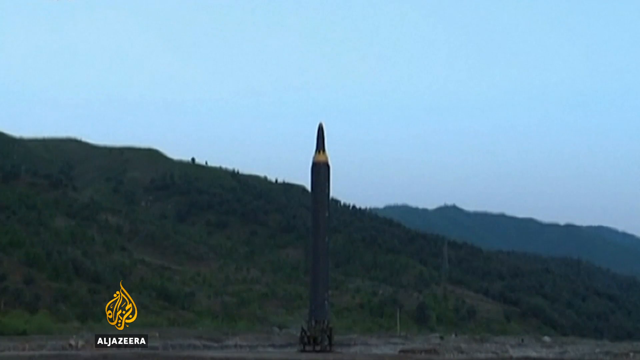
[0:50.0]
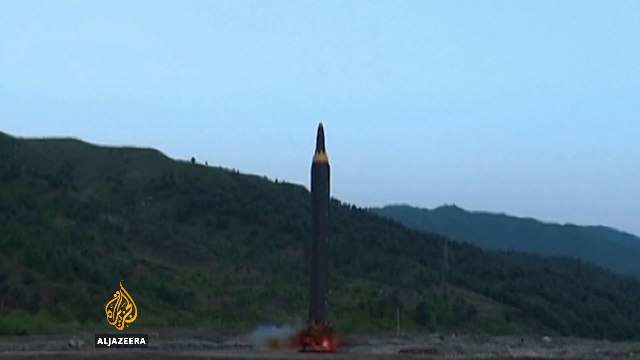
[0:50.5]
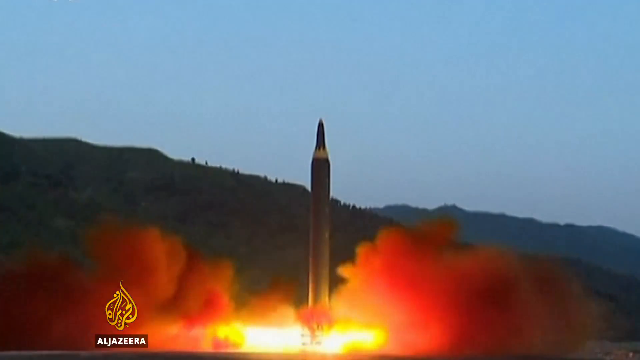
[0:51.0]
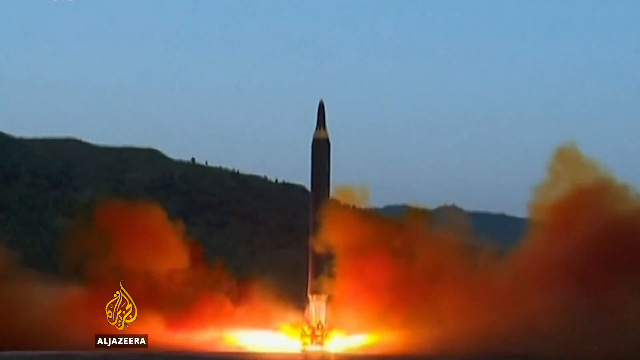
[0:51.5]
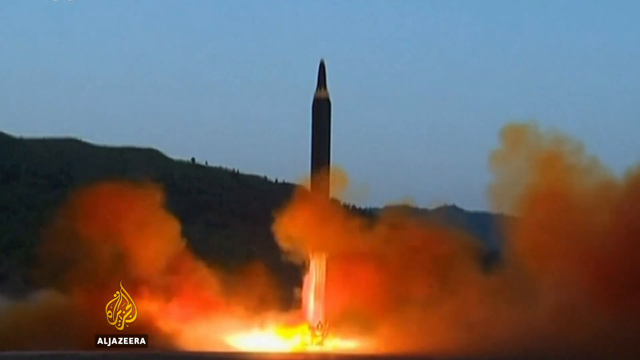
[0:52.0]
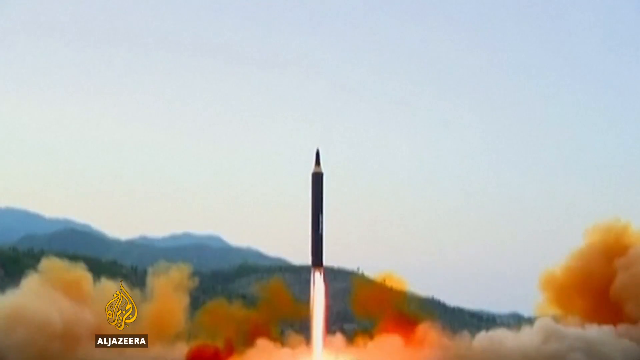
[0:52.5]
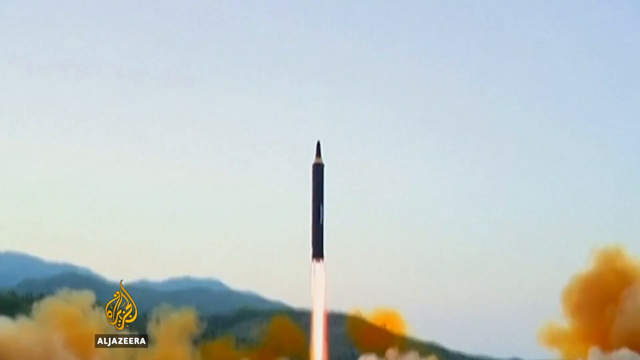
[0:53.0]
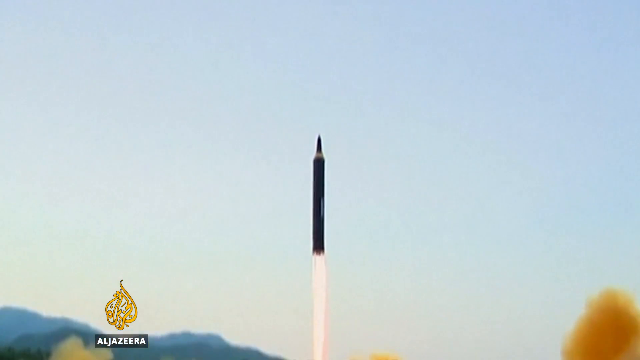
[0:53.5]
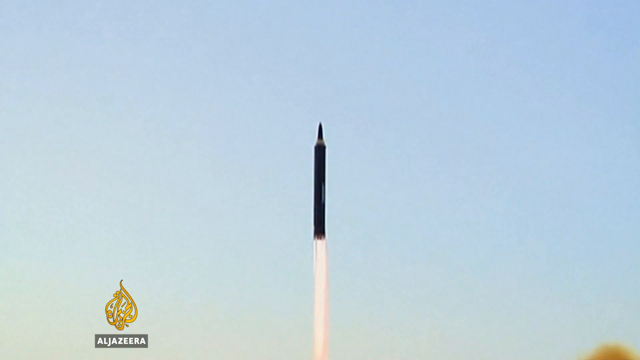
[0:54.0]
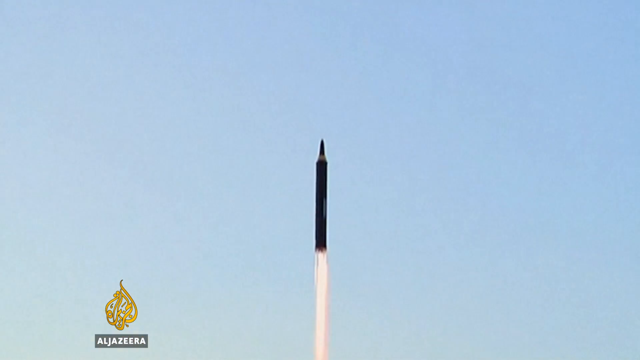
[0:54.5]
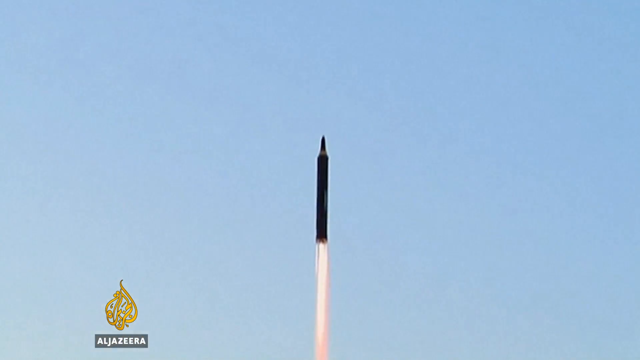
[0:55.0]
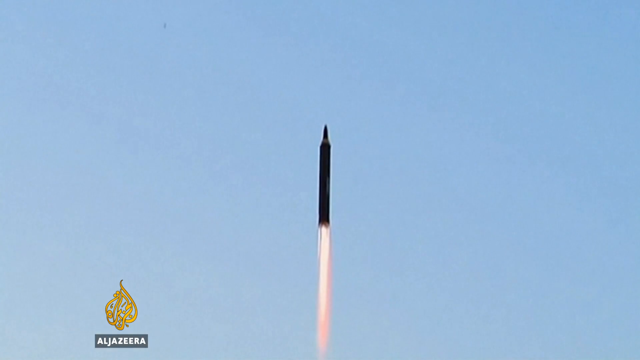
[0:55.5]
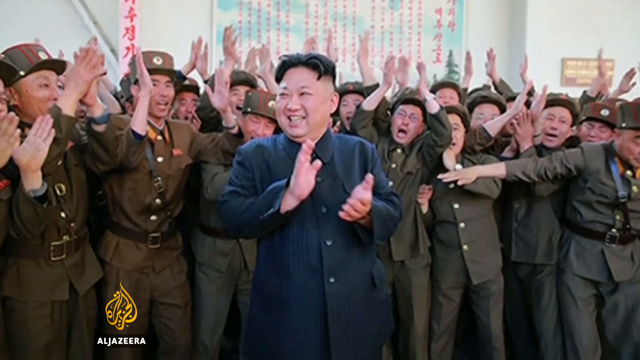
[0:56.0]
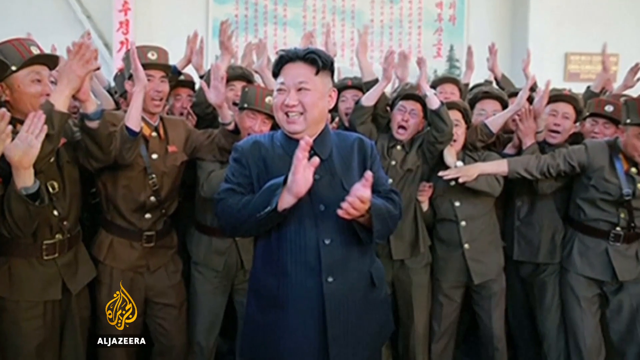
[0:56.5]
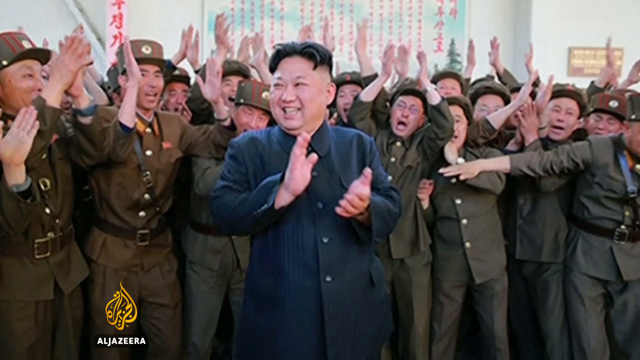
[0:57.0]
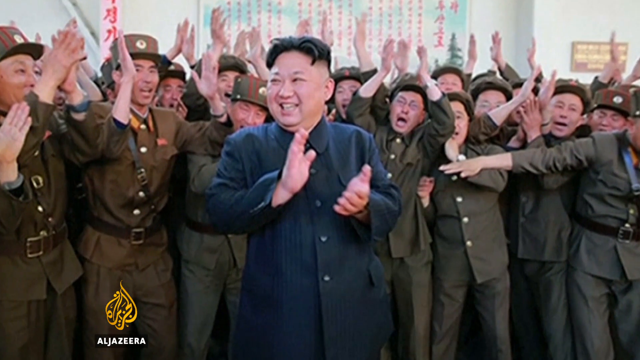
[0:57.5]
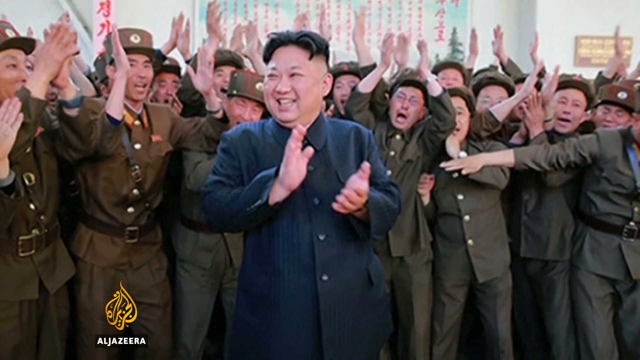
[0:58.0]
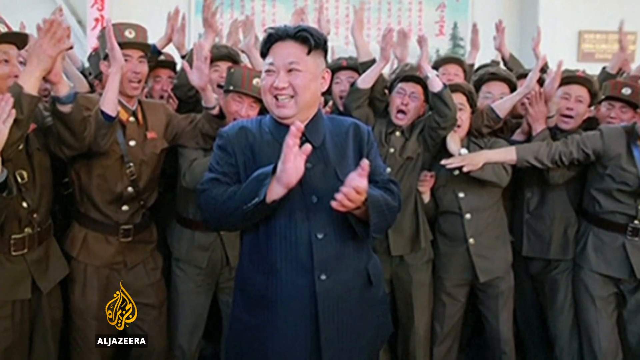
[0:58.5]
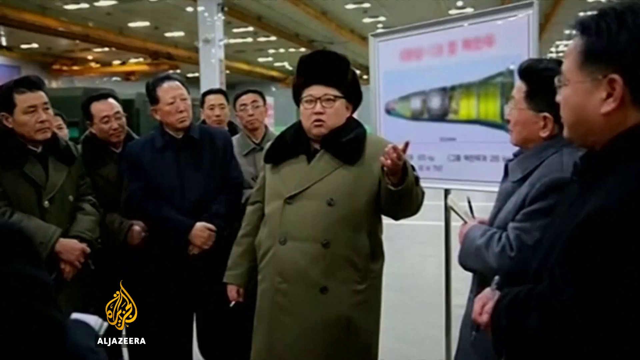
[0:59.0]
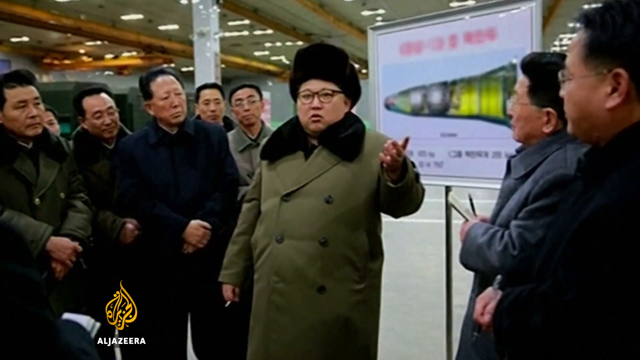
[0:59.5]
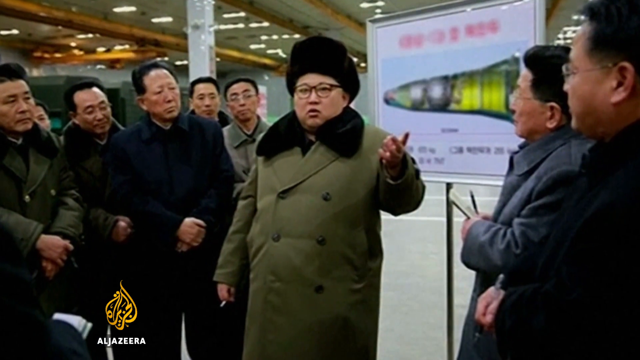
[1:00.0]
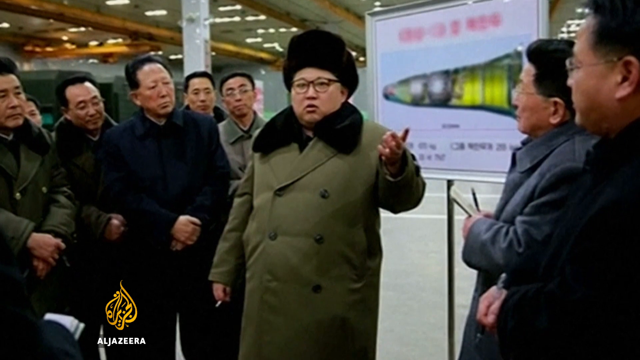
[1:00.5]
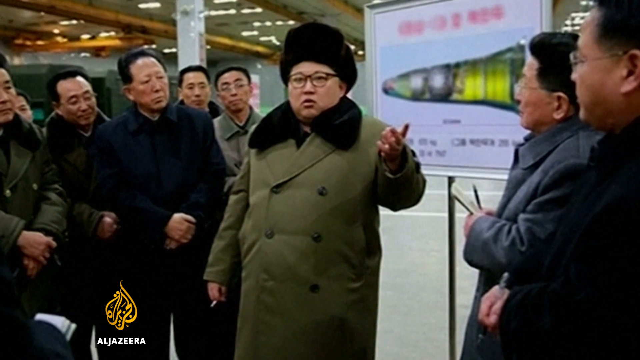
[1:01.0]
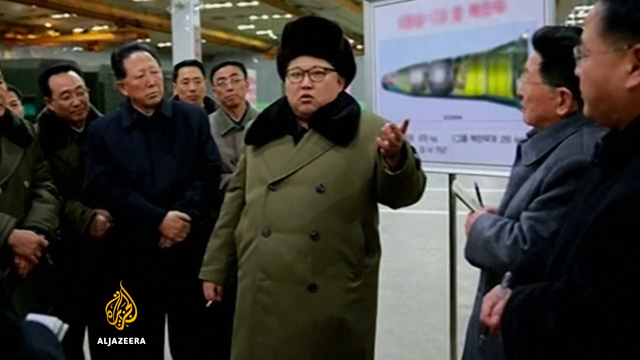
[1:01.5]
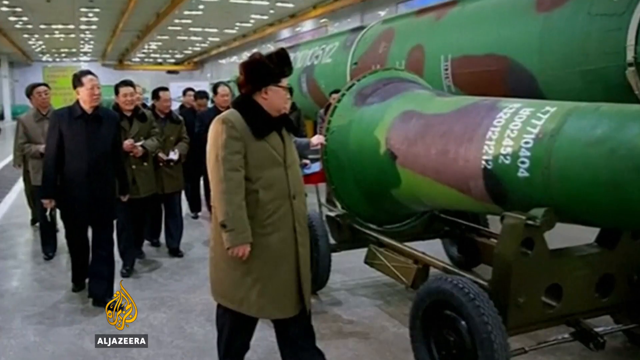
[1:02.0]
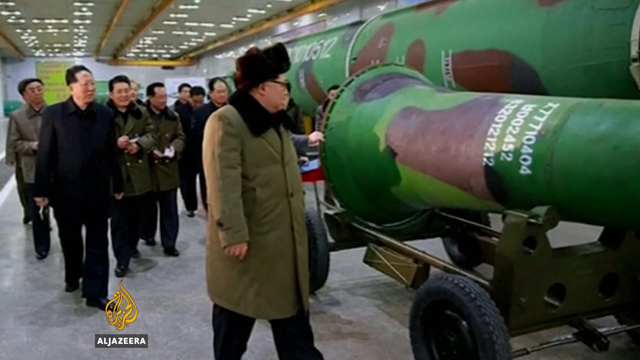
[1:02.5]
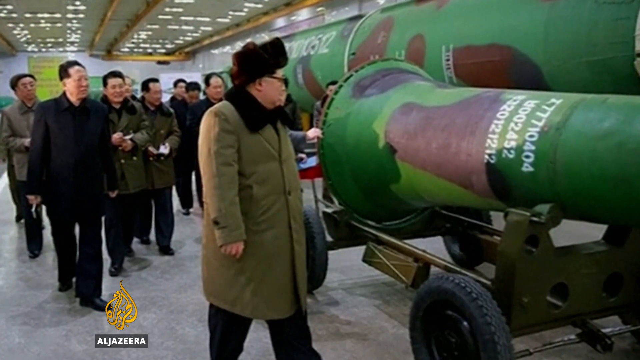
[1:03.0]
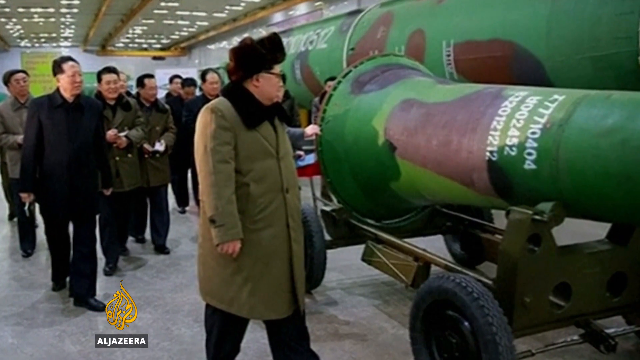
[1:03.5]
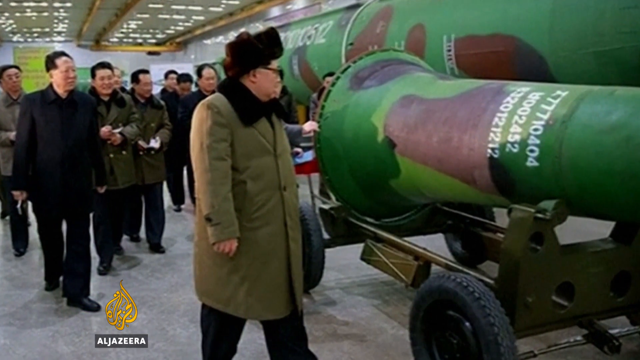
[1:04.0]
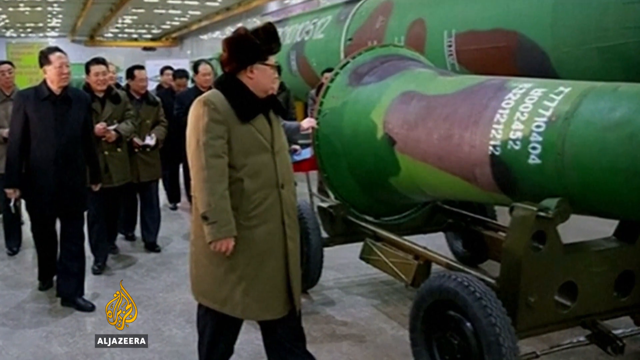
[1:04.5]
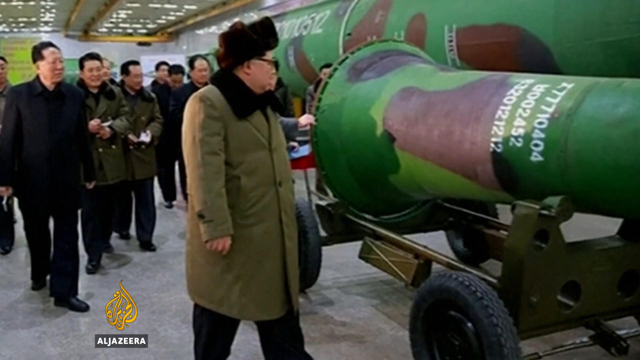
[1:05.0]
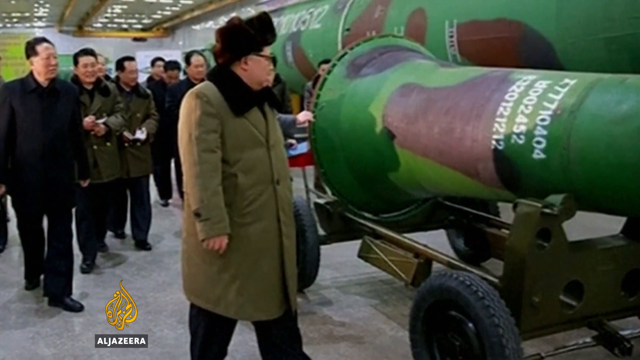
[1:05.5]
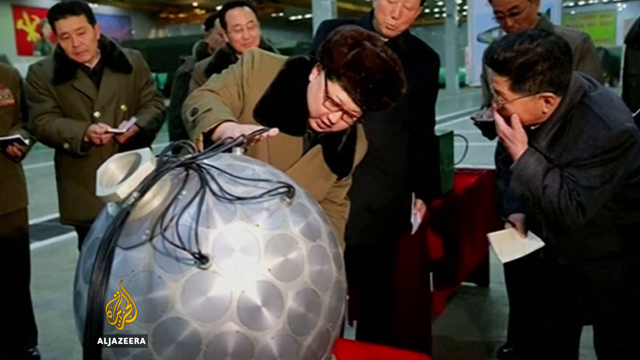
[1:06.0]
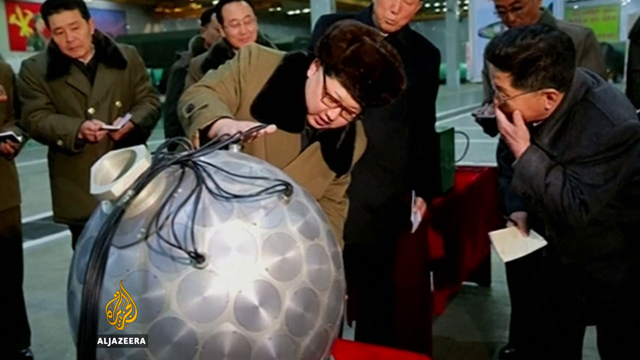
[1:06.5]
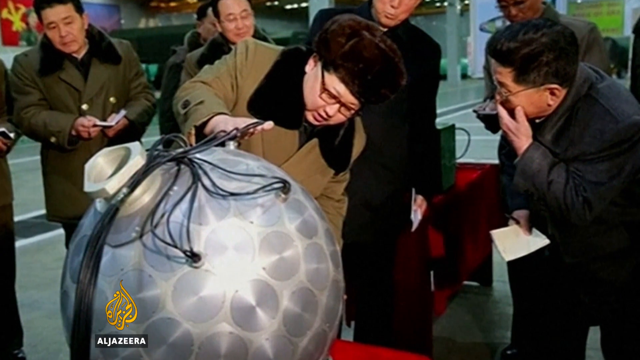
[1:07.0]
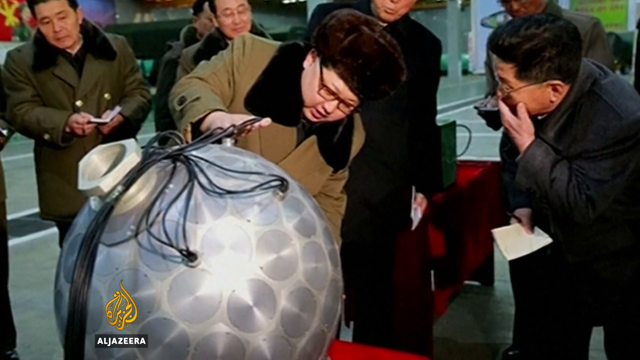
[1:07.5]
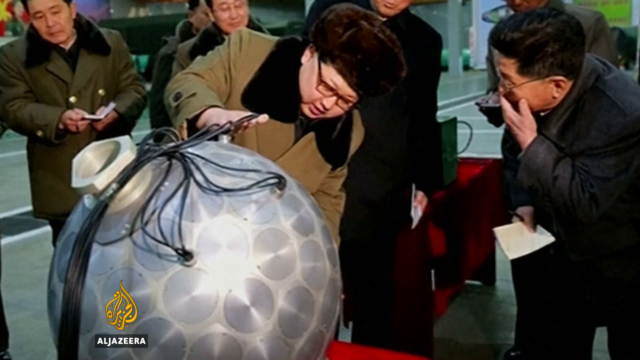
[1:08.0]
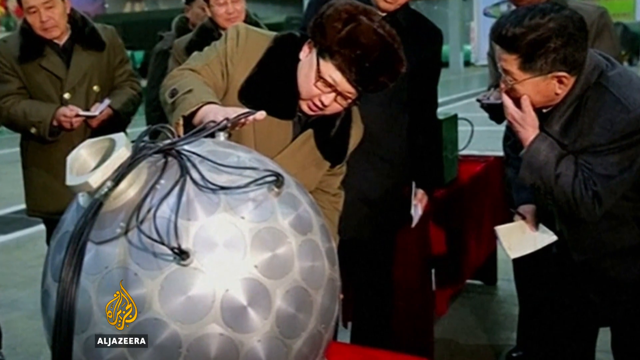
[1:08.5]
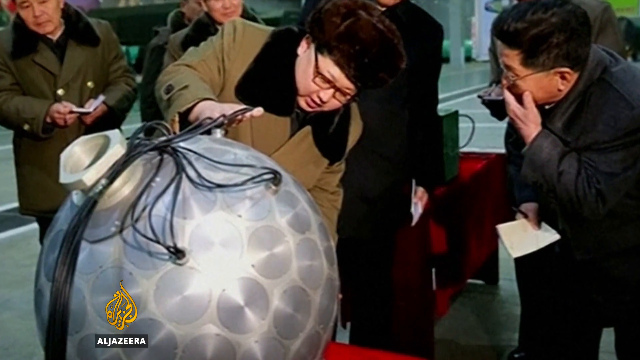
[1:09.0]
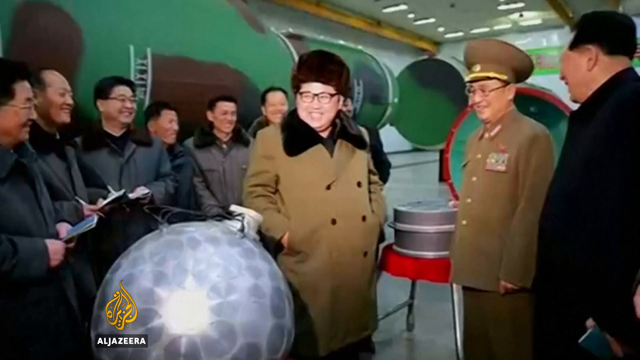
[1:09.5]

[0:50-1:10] A rocket launches into the sky, leaving a lot of dust on the ground that even looks orange, and keeps rising into a clear blue sky. A man in a navy blue suit claps his hands and smiles; behind him are many men in army uniforms and hats, also happy, with their hands in the air, clapping. The same man, now in a green coat and a hat, walks among other men. He then walks towards a green rocket, seemingly being shown the rocket by someone, with a few men walking behind him. Then a man touches a silver ball with a few other men behind him.